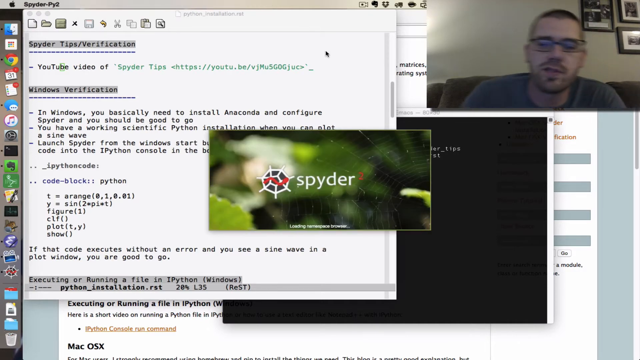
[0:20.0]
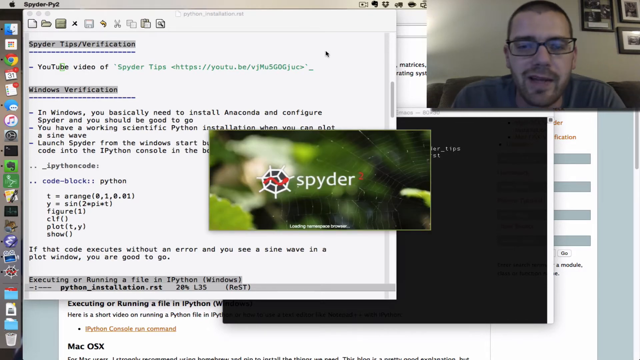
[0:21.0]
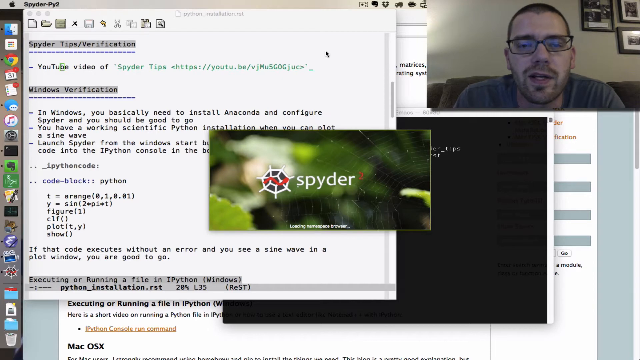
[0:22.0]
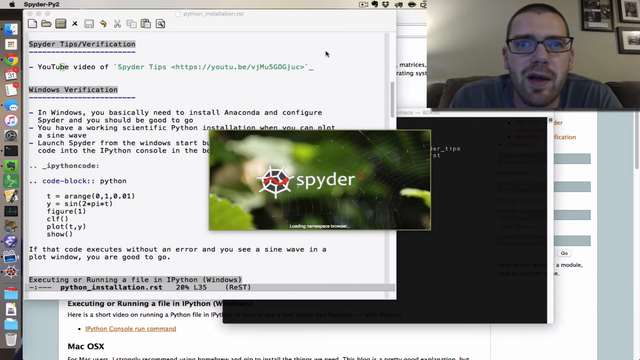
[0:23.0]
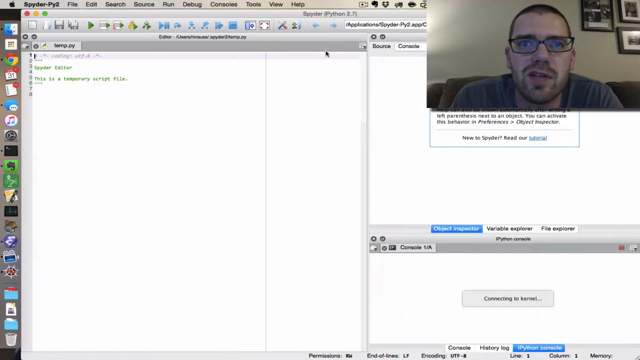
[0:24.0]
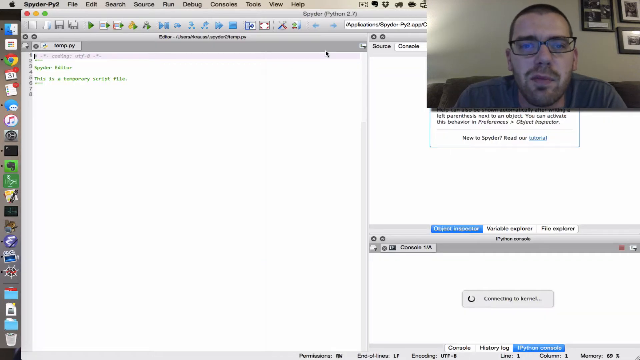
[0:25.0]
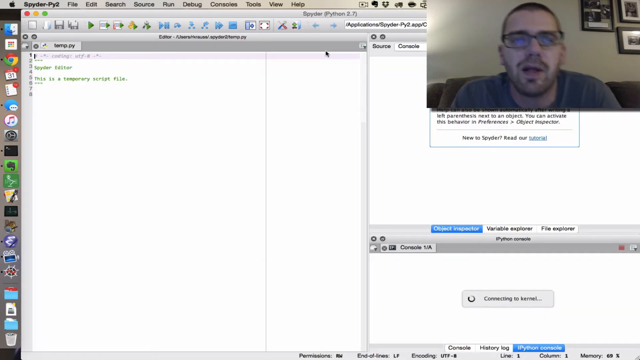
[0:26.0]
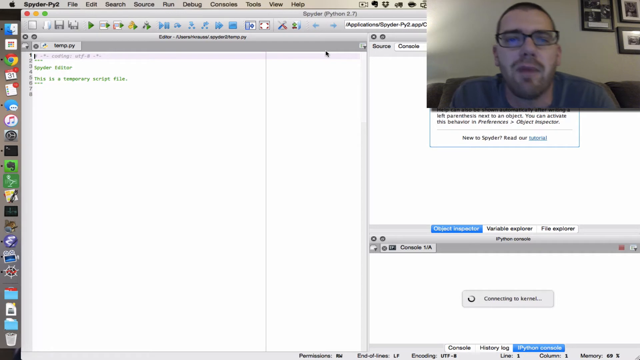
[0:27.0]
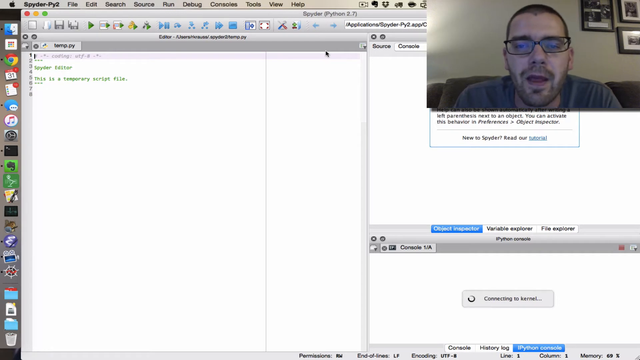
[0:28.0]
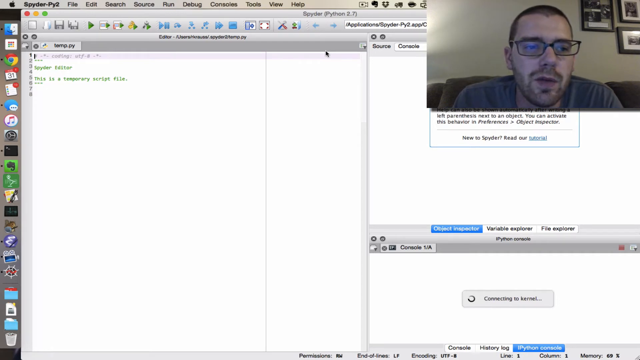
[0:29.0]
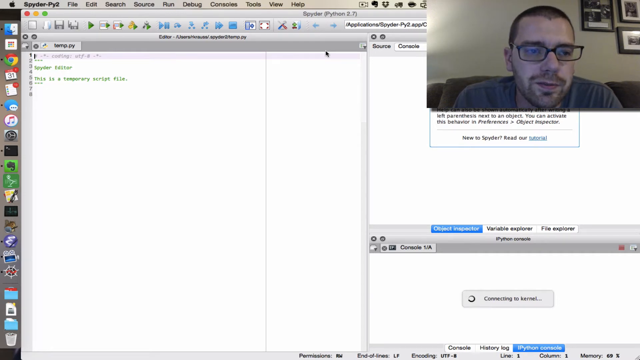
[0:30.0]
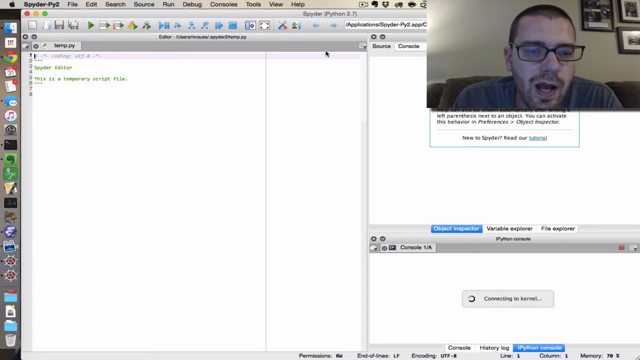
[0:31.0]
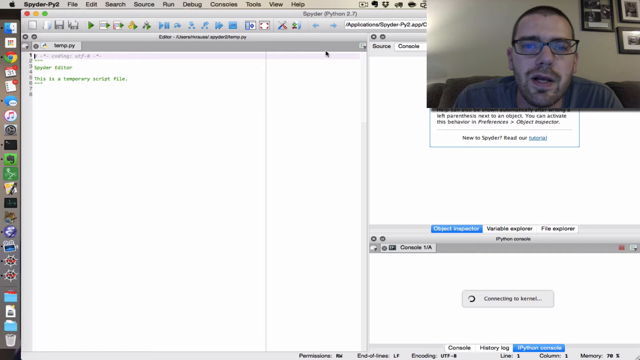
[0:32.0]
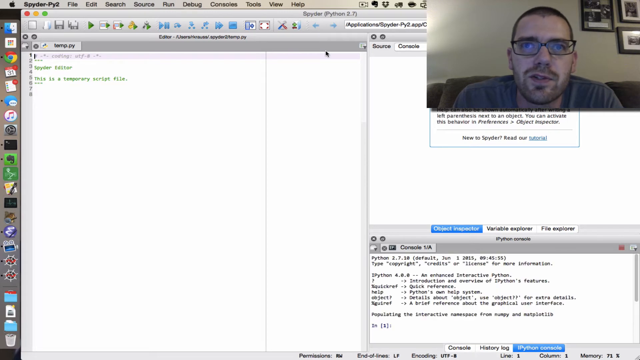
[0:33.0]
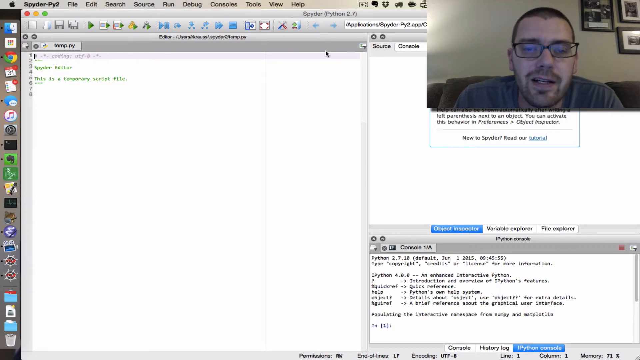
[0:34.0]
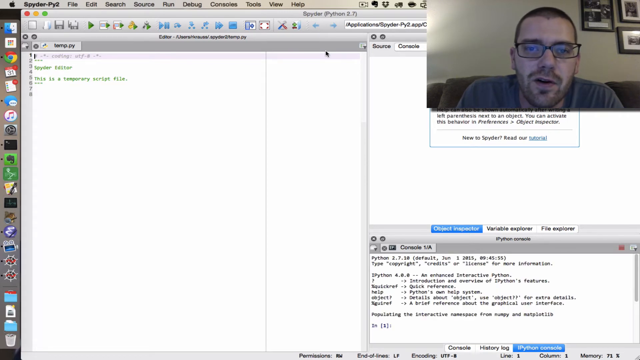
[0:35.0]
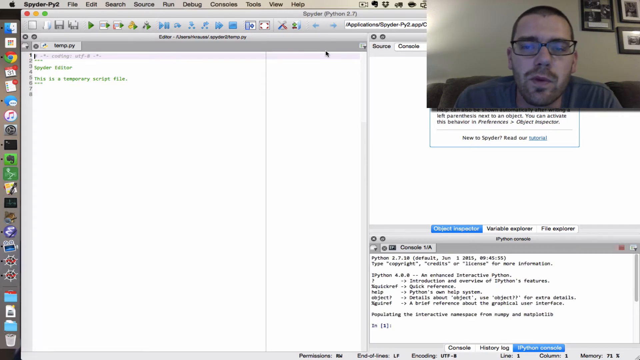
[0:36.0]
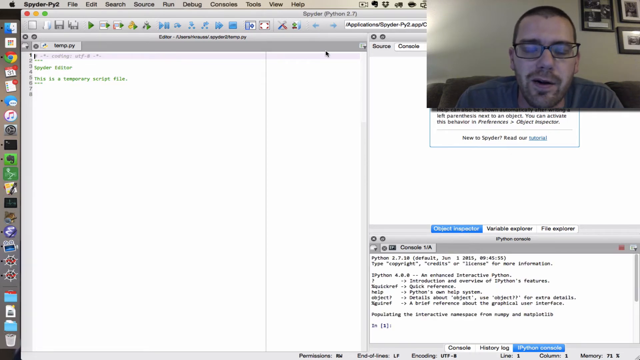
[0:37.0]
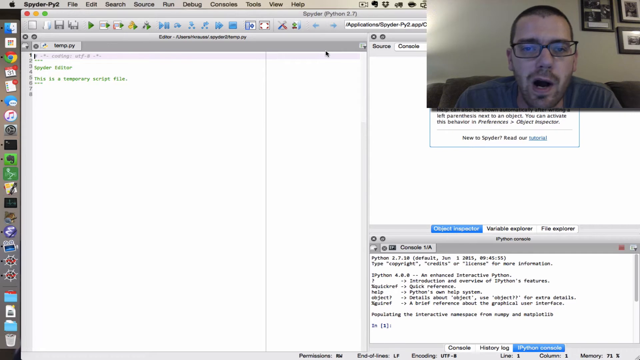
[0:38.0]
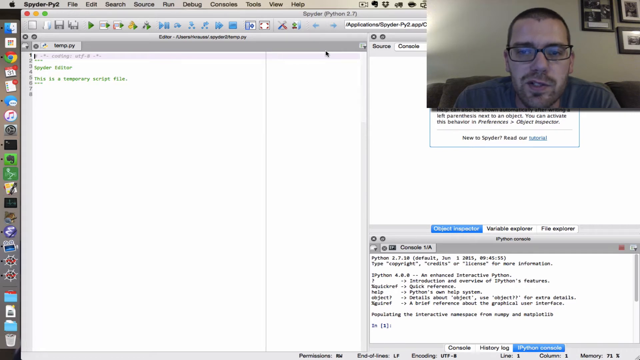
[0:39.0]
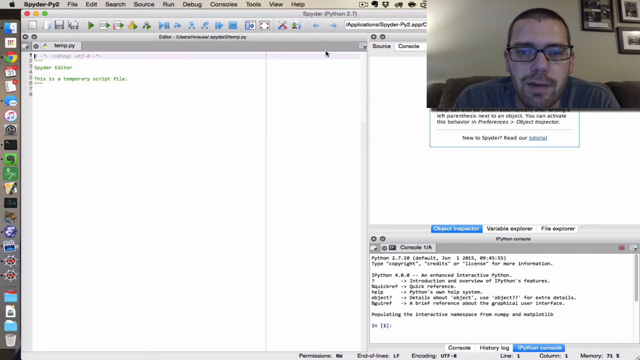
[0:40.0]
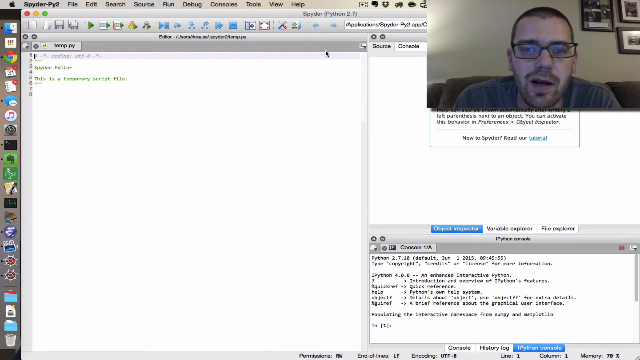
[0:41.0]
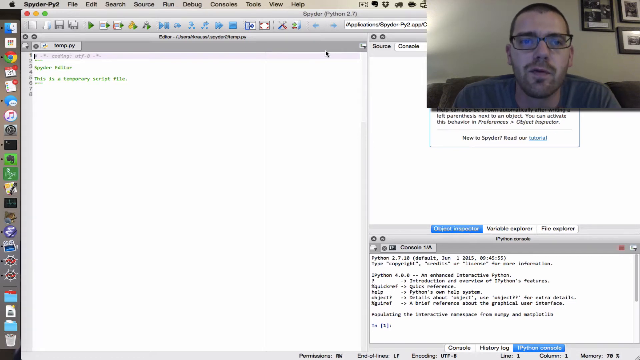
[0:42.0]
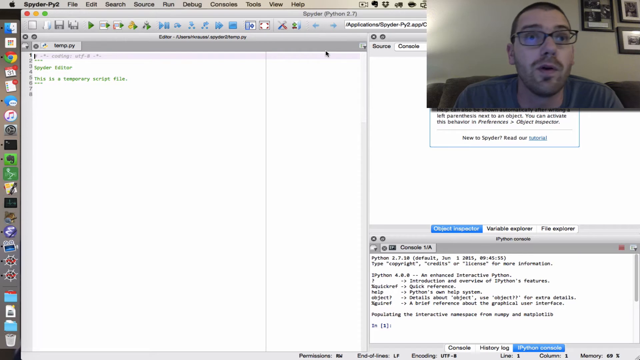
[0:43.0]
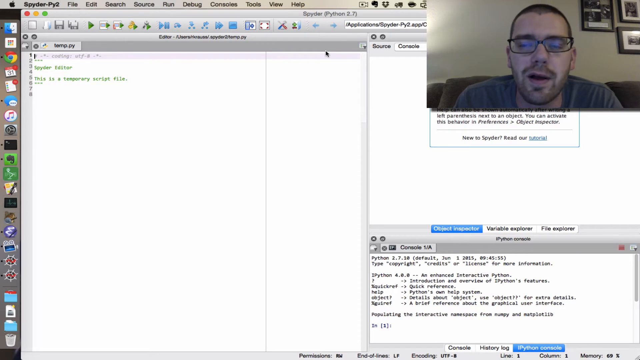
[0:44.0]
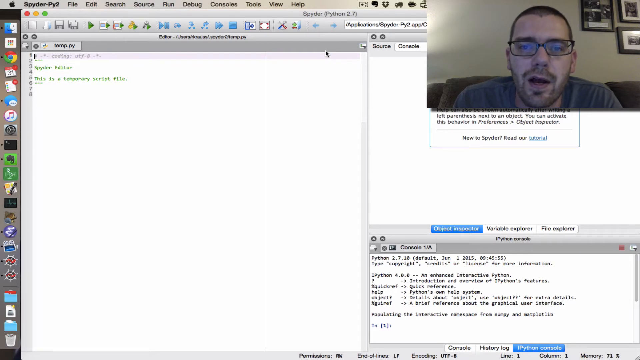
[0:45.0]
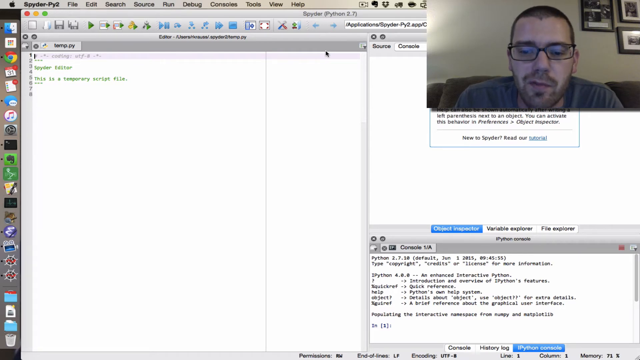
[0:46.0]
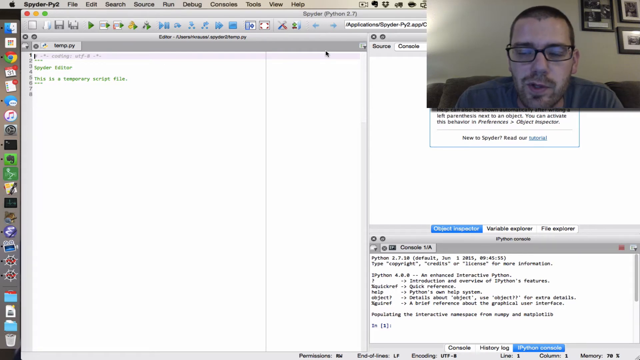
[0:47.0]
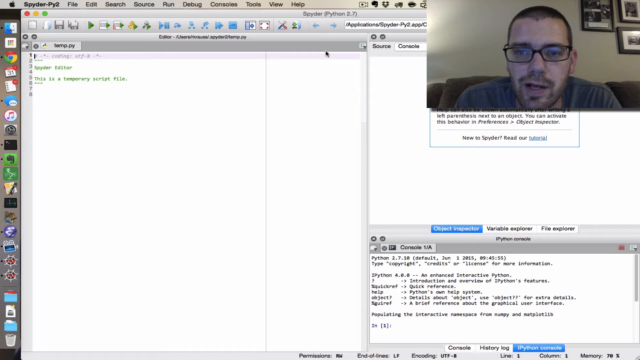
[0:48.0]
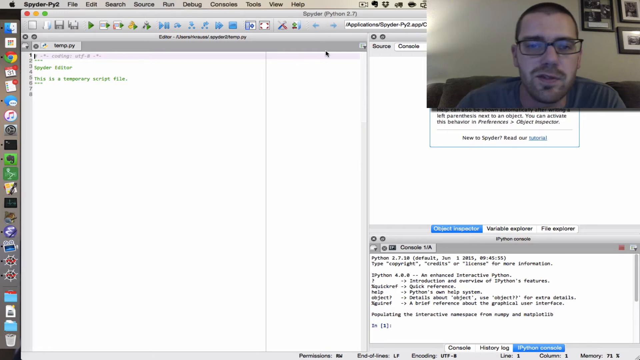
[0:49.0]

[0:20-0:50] Spyder is loading in the middle of the screen with three or four pop-ups behind it. Then the screen says "editor" at the top, and it appears to be Spyder-Python 2. There is a series of code lines numbered one through eight, written on top of each other and hard to see because they are fuzzed out. It looks like "Spyder editor" appears in green. He keeps talking. Right underneath the video of him is another pop-up box reading "new to Spyder read our tutorial" with three options, one of them in a blue tab. Underneath that it says "Python console." There appear to be three different pop-ups, or possibly three panes in the same program. The cursor blinks at the top.